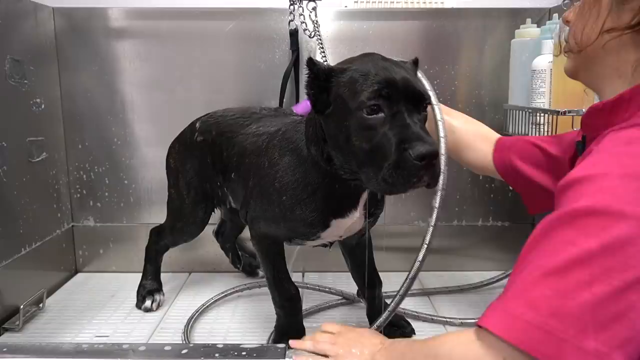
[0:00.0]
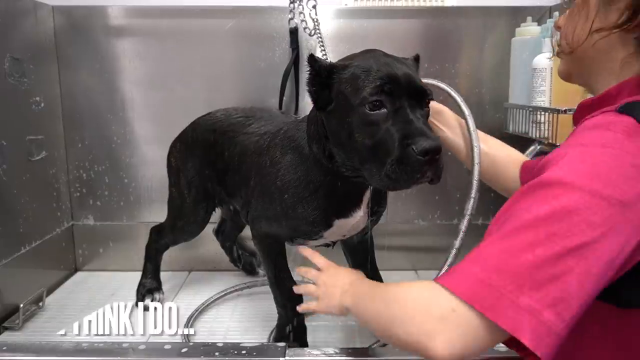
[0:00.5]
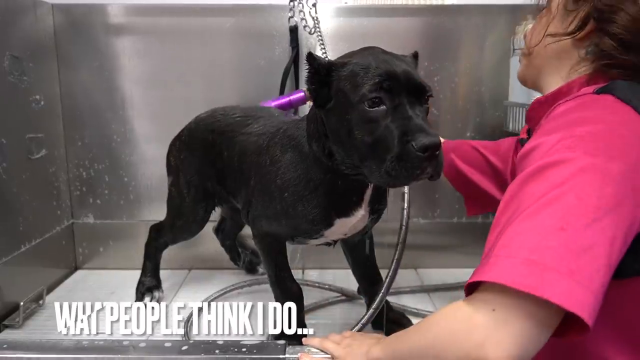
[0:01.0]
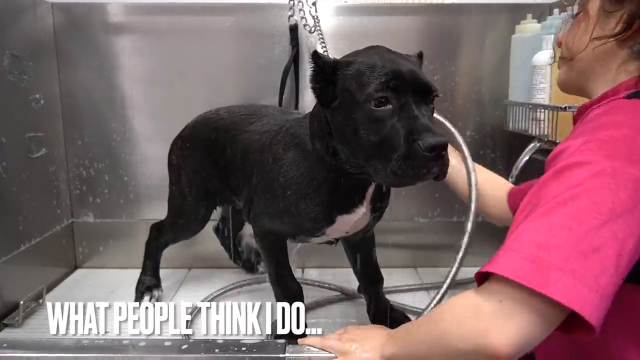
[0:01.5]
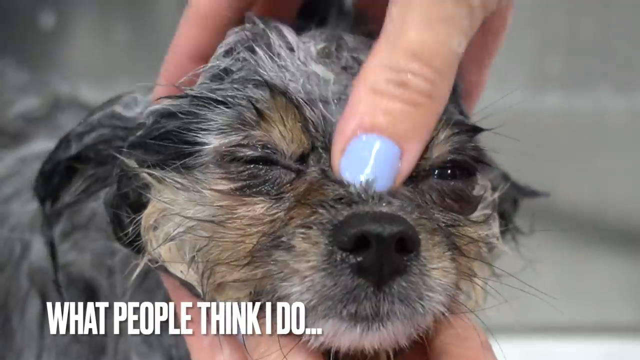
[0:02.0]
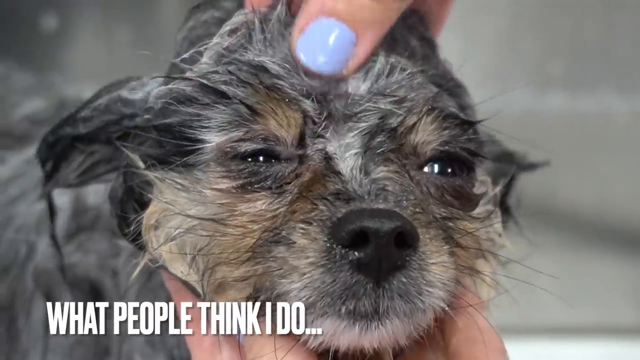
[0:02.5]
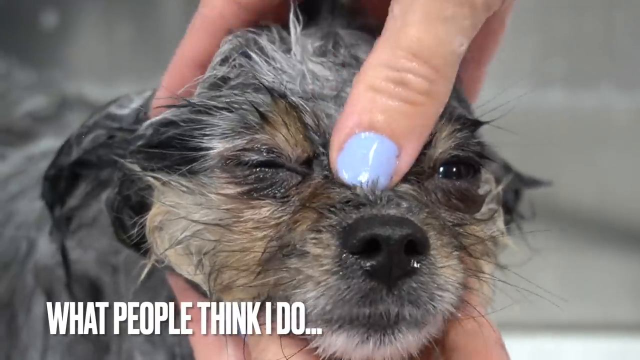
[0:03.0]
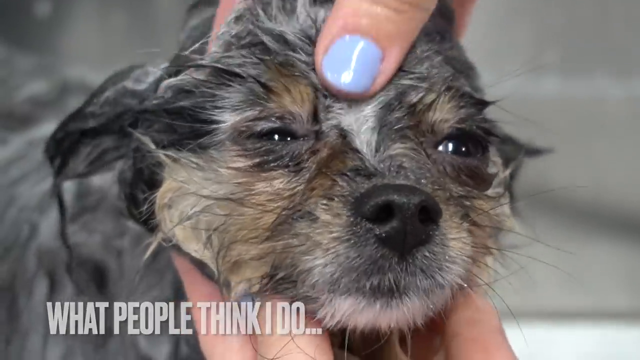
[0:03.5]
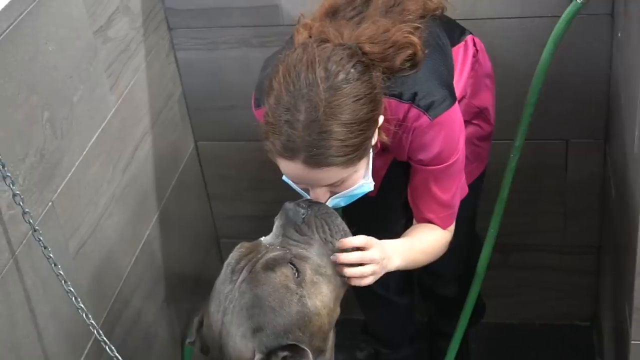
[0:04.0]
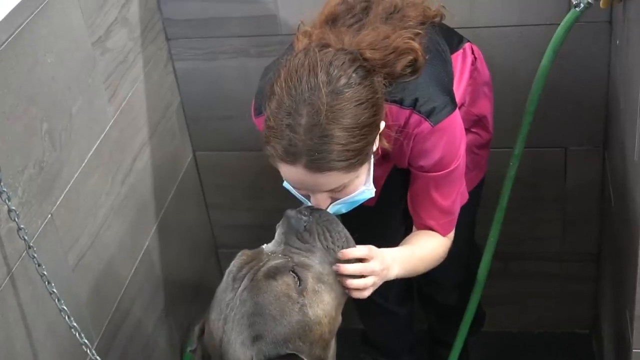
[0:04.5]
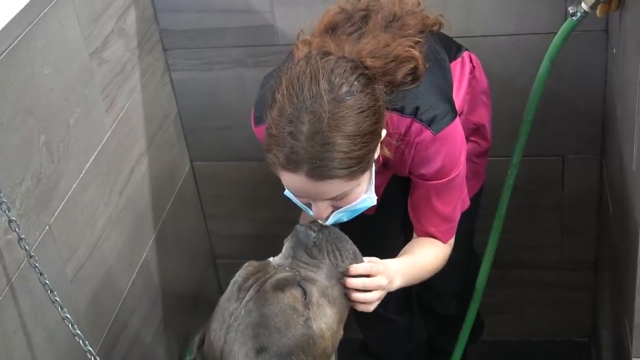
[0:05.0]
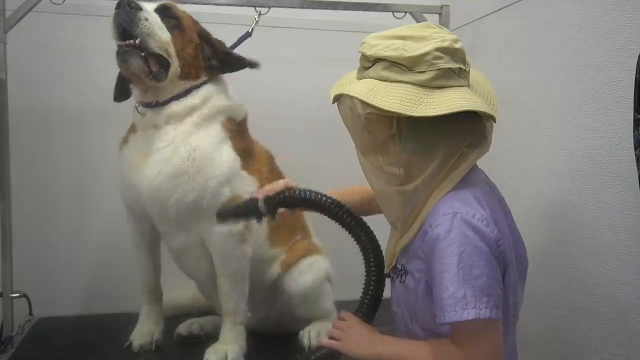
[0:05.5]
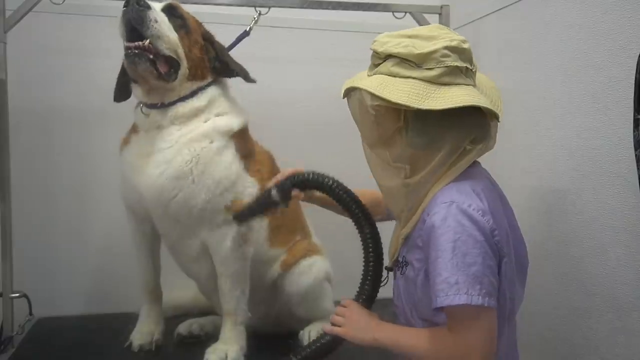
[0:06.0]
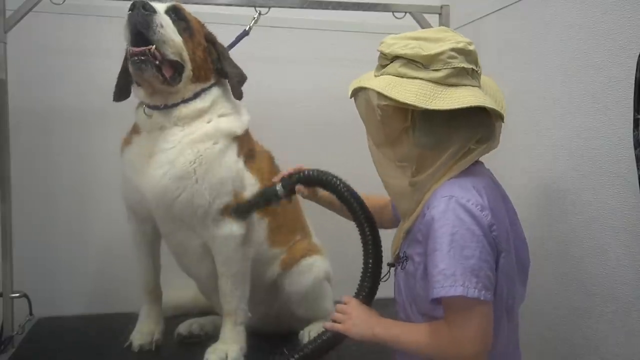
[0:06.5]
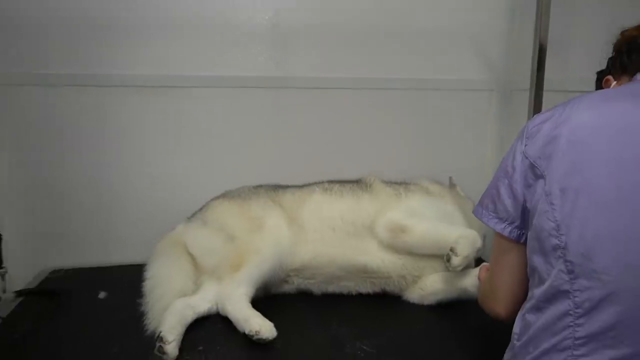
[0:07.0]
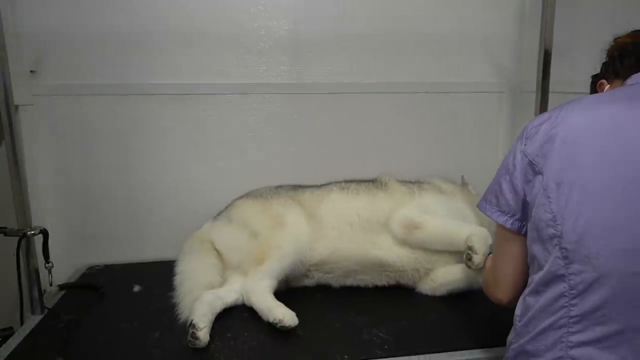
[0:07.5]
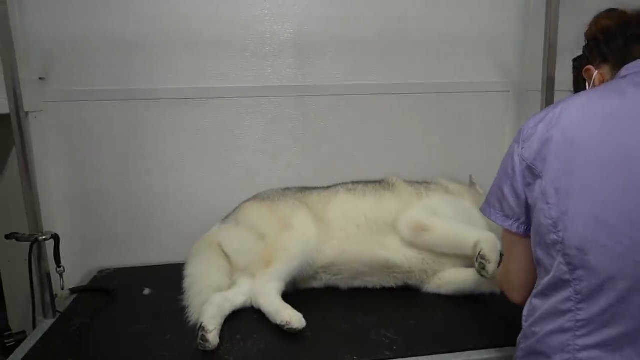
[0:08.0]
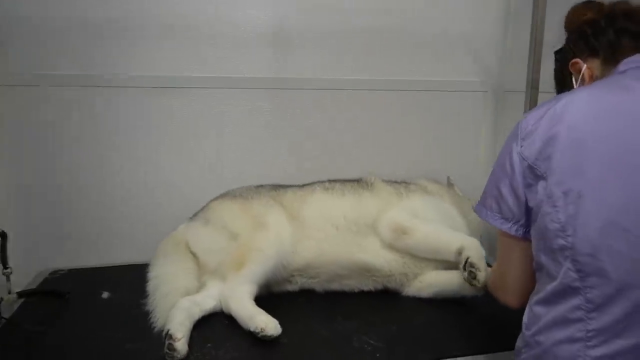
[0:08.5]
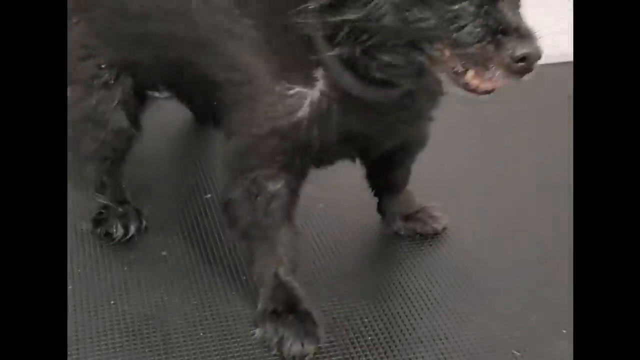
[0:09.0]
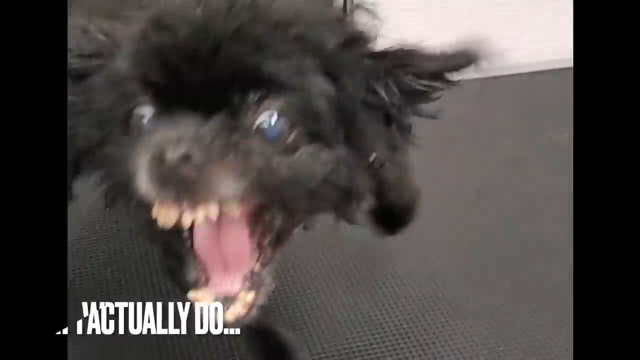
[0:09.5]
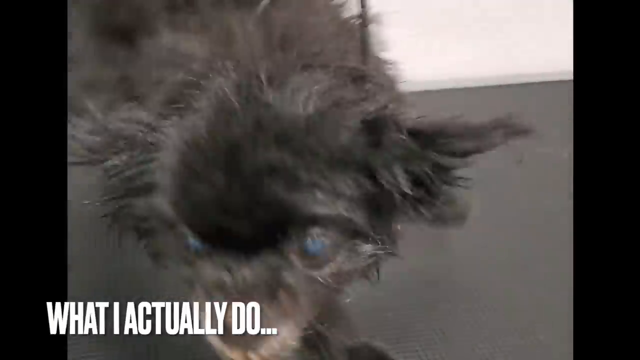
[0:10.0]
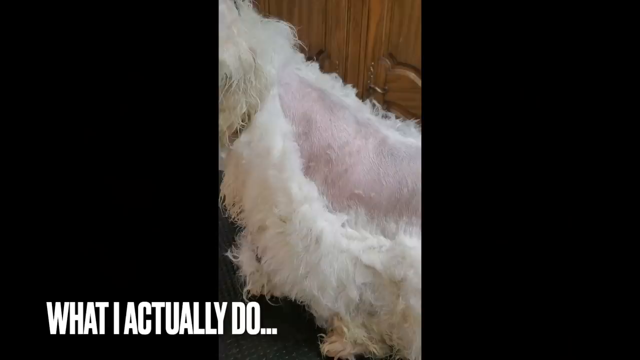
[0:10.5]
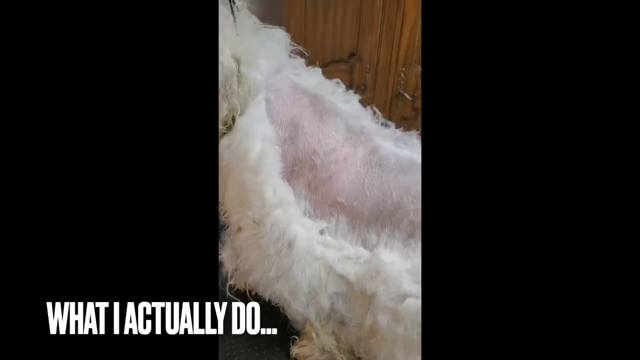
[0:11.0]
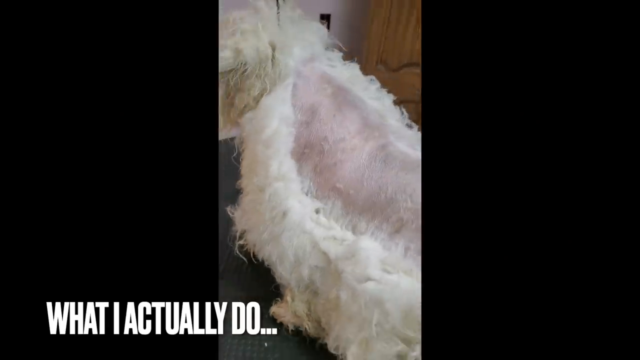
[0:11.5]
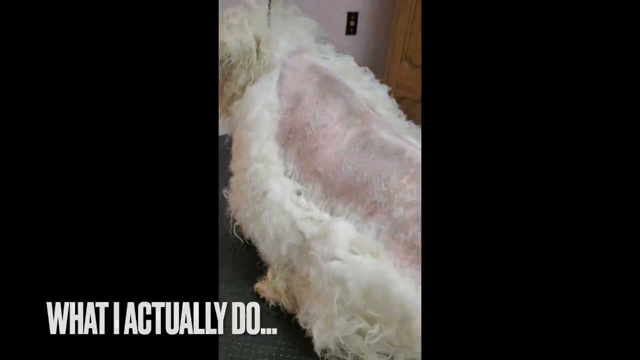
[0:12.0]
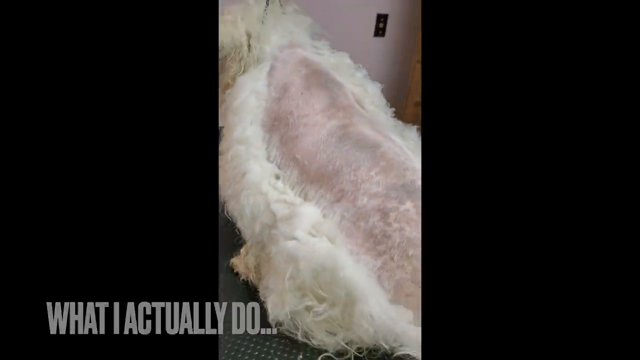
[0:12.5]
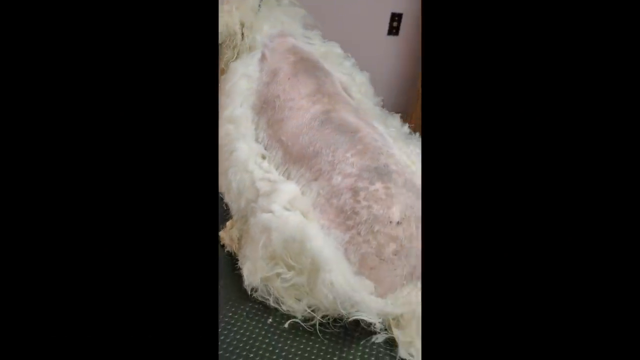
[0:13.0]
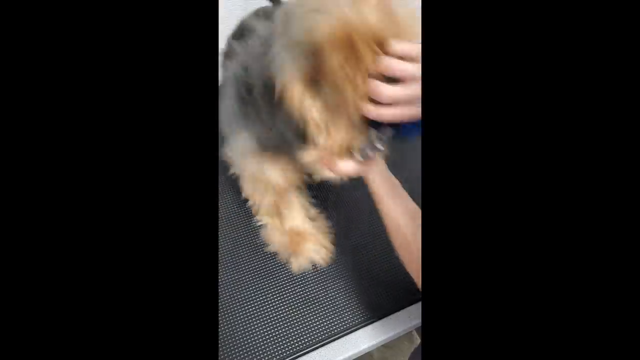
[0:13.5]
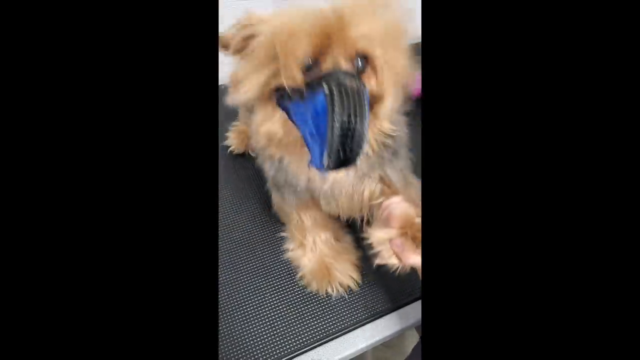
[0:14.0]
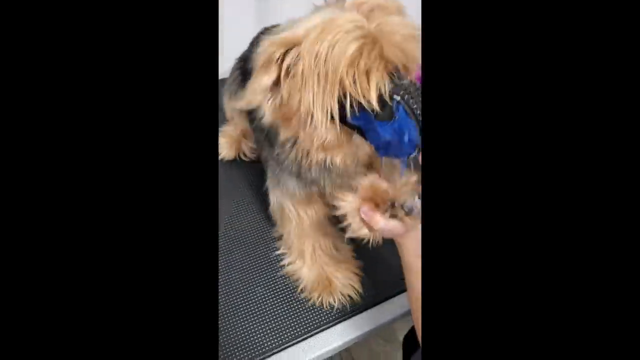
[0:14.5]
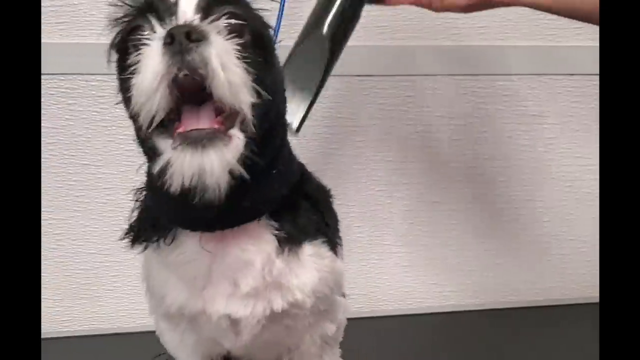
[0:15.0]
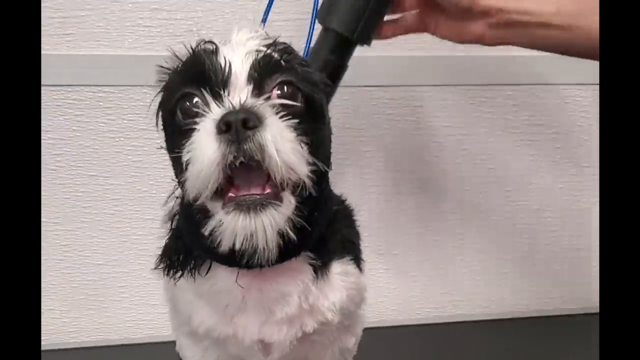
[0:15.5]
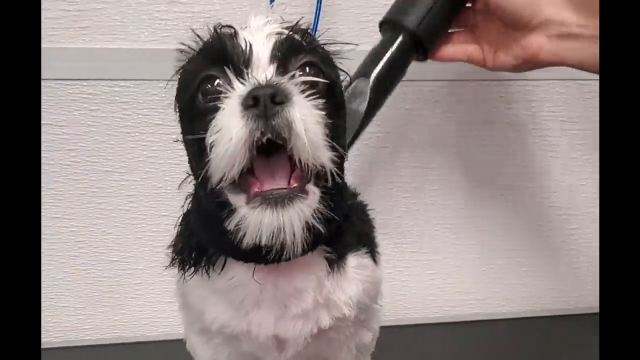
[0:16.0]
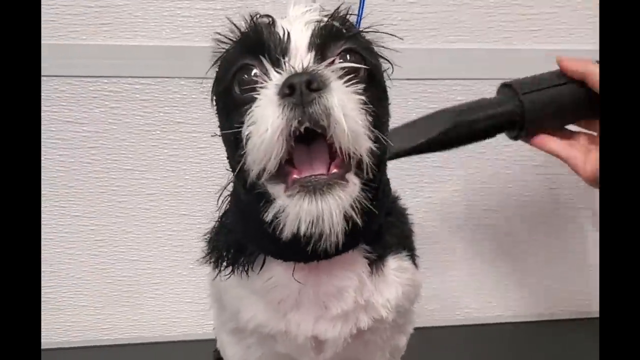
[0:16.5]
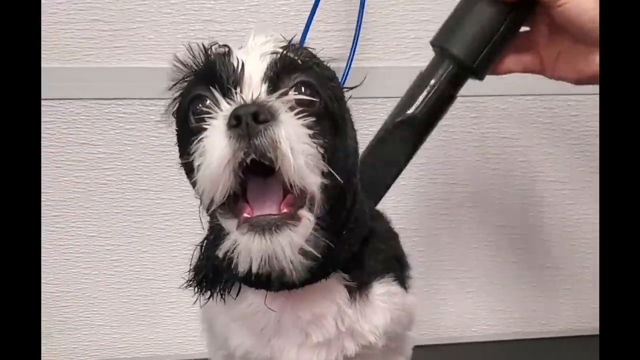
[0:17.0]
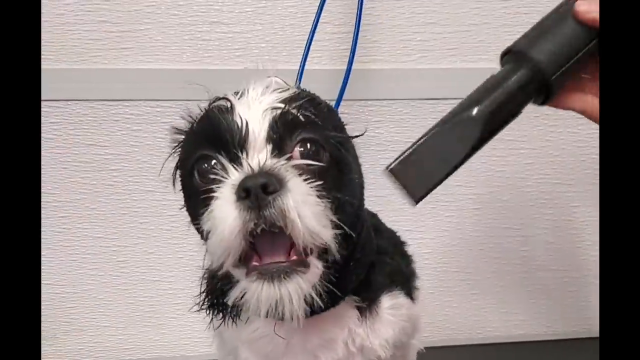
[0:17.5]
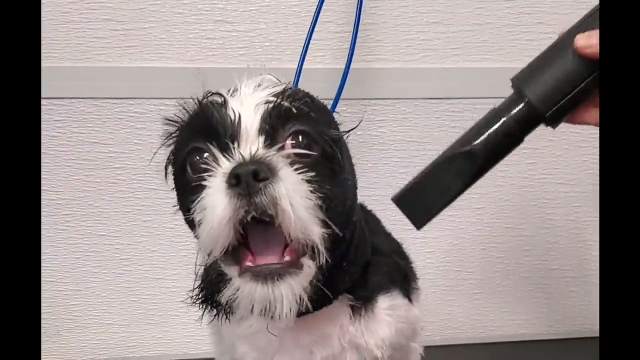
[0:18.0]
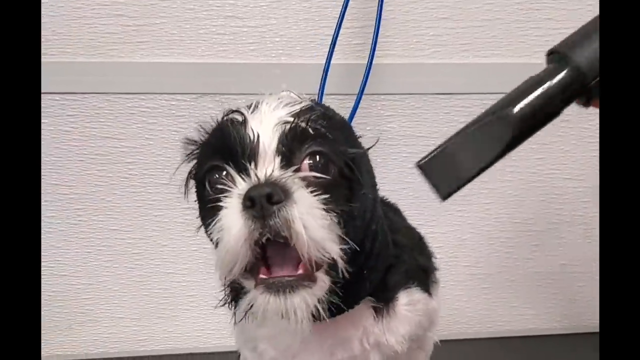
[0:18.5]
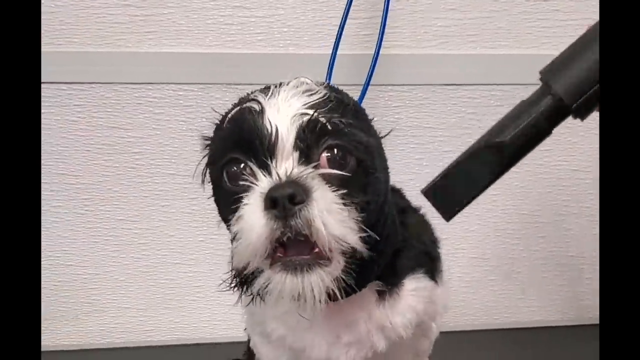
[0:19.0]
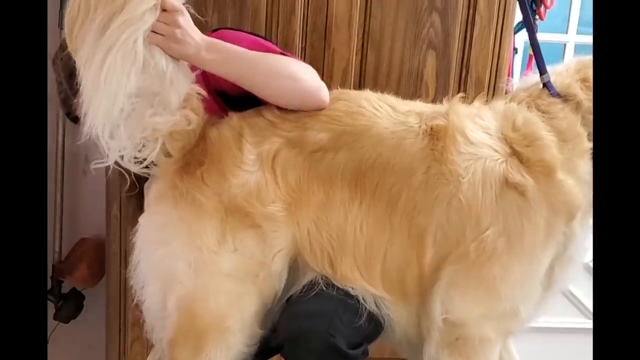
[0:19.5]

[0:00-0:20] A small dog is groomed by a woman in a magenta top, with the text "what people think I do" below the dog. The same woman is then shown for a few more seconds grooming other dogs, which look peaceful and content. Another woman, a groomer in a blue shirt, grooms dogs as well, and these dogs also look peaceful. A few seconds later a new shot appears with the text "what I actually do," followed by different dogs being groomed. These dogs are visibly agitated; they apparently are not in pain but seem unused to being groomed, so they look relatively annoyed, some angry and some very excited, as they are brushed, combed and groomed.